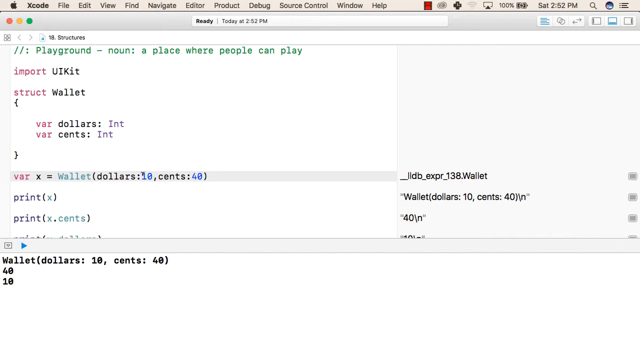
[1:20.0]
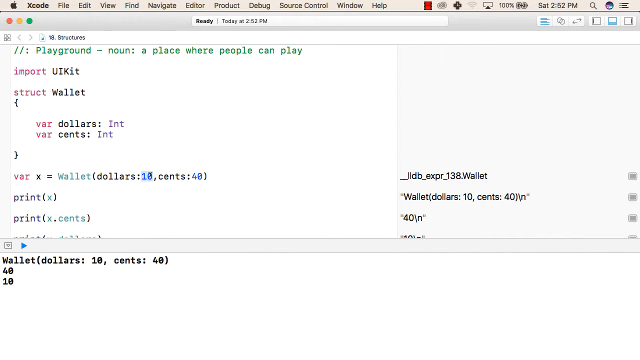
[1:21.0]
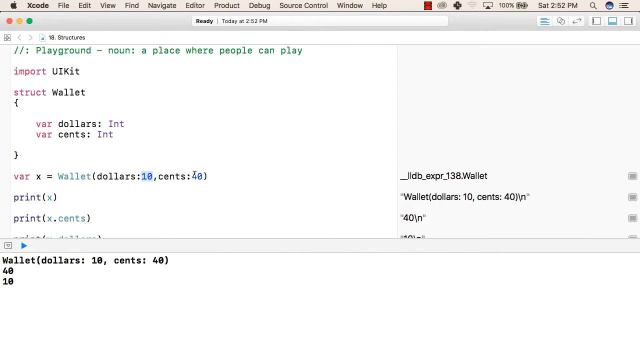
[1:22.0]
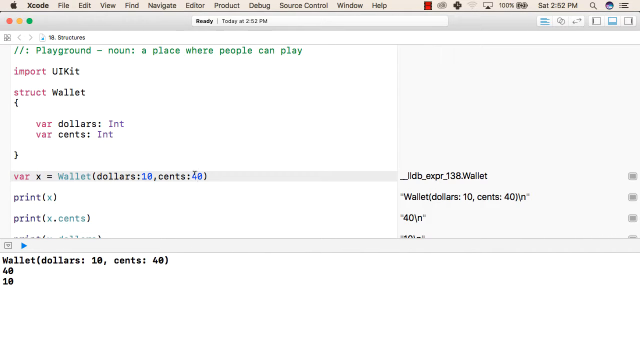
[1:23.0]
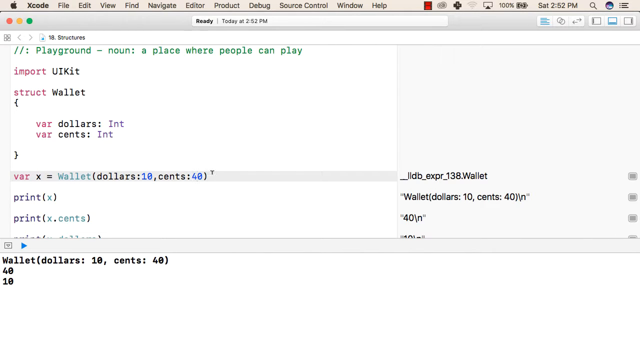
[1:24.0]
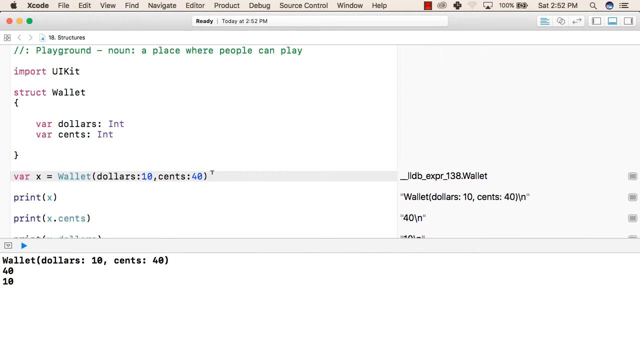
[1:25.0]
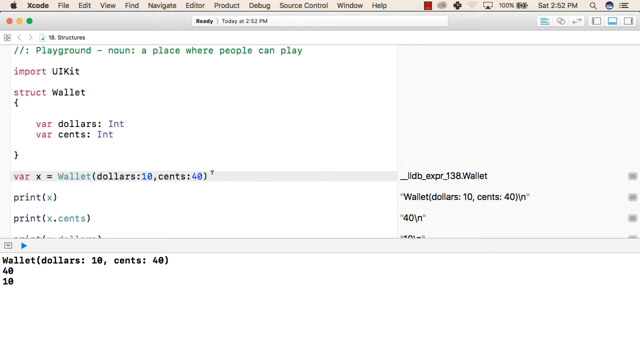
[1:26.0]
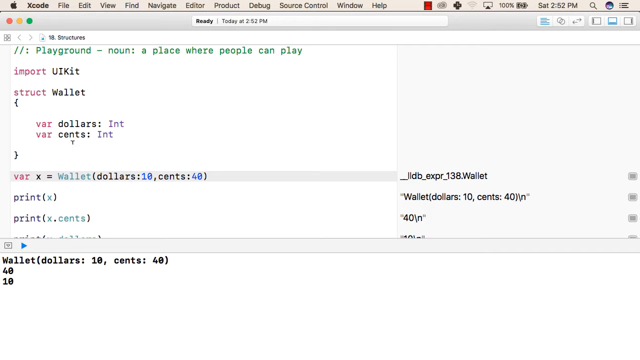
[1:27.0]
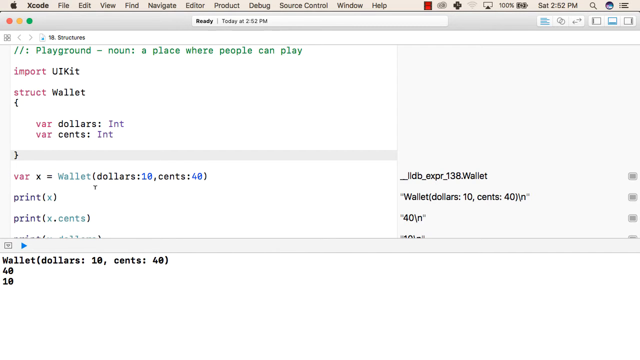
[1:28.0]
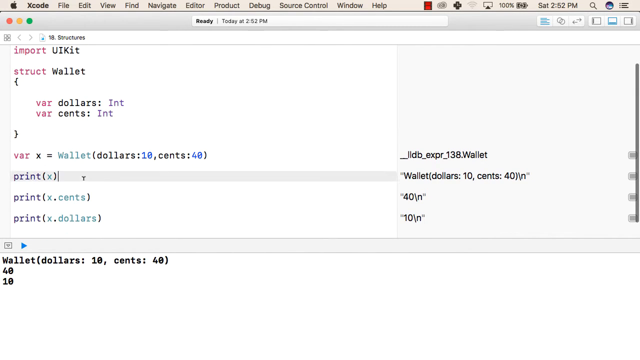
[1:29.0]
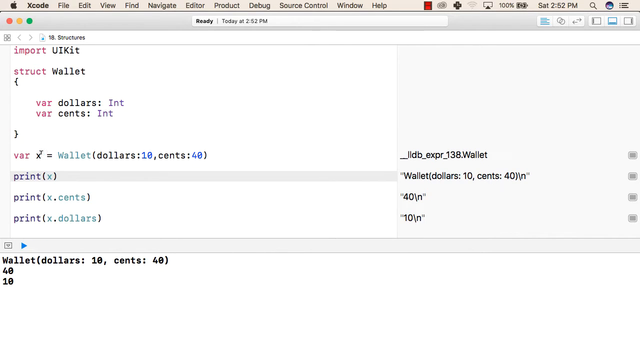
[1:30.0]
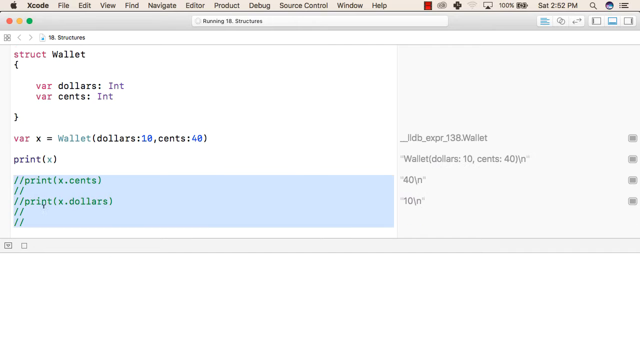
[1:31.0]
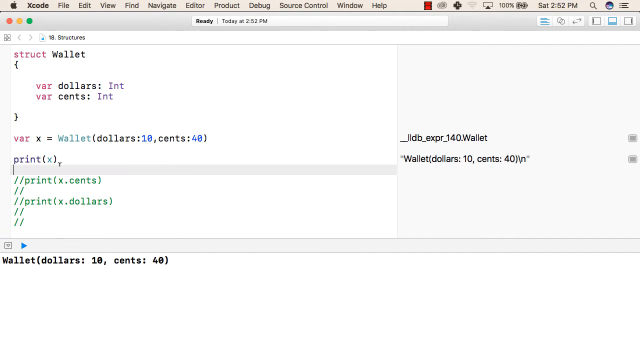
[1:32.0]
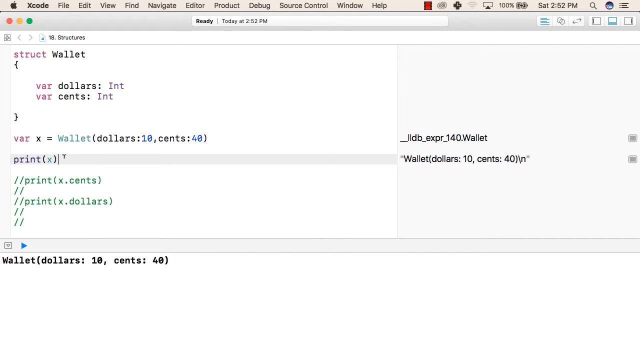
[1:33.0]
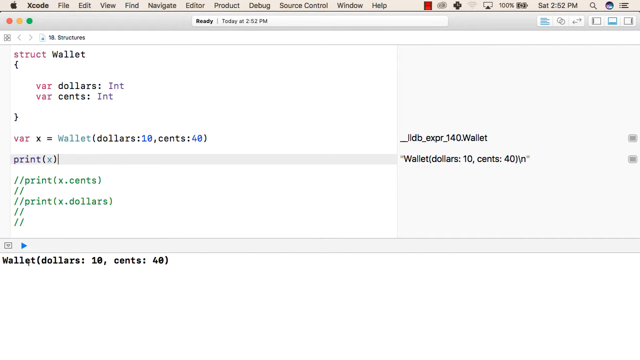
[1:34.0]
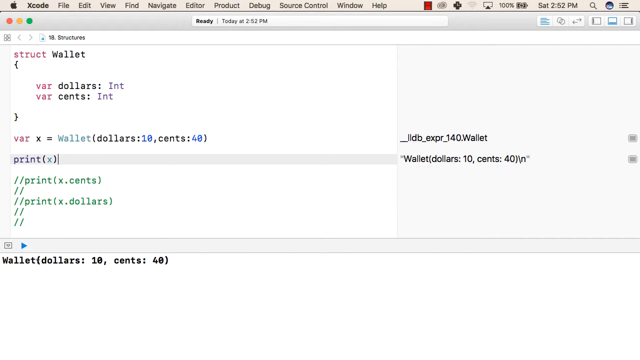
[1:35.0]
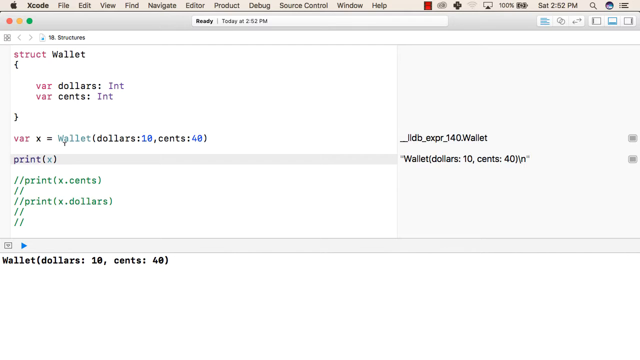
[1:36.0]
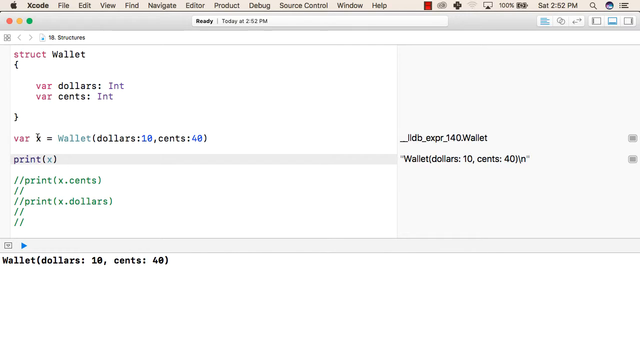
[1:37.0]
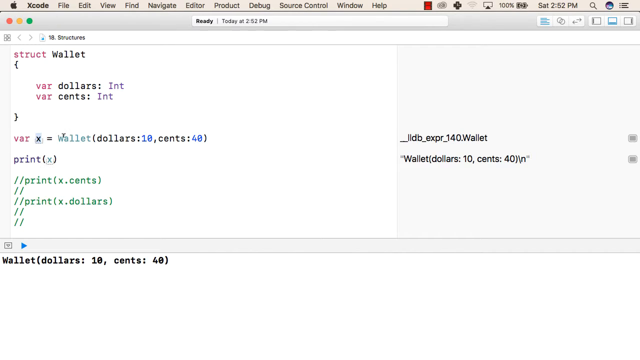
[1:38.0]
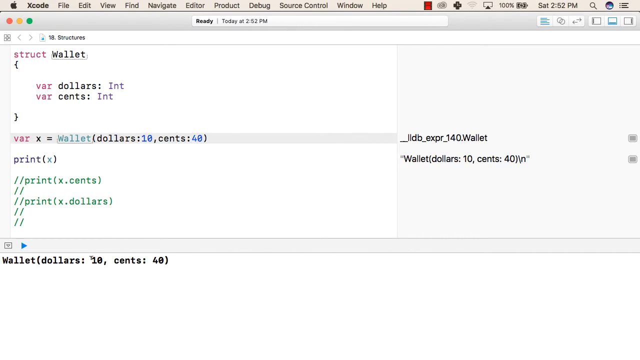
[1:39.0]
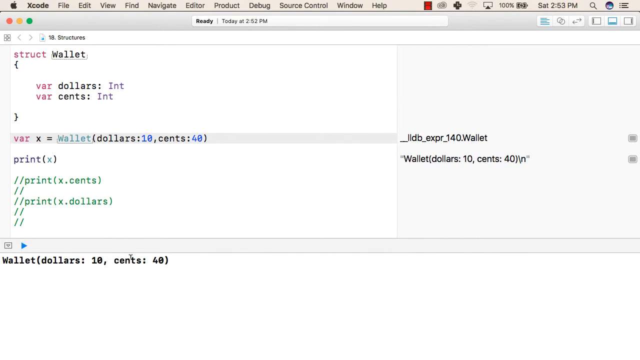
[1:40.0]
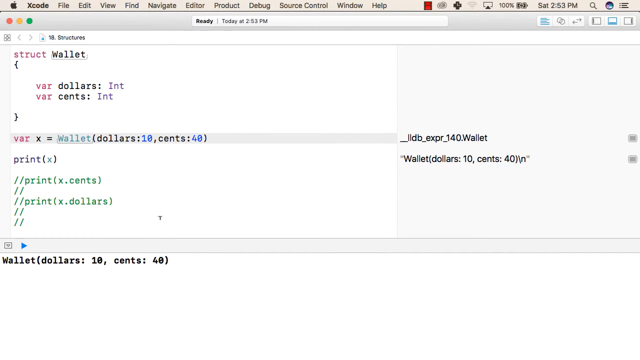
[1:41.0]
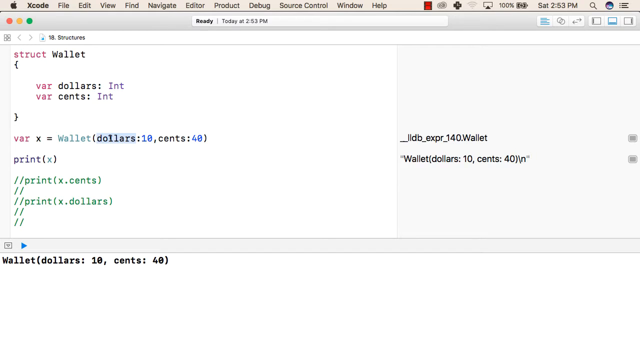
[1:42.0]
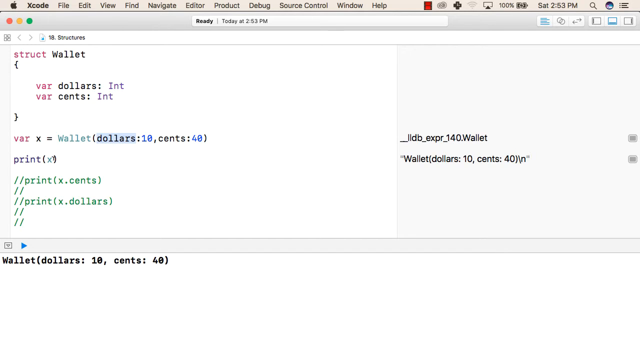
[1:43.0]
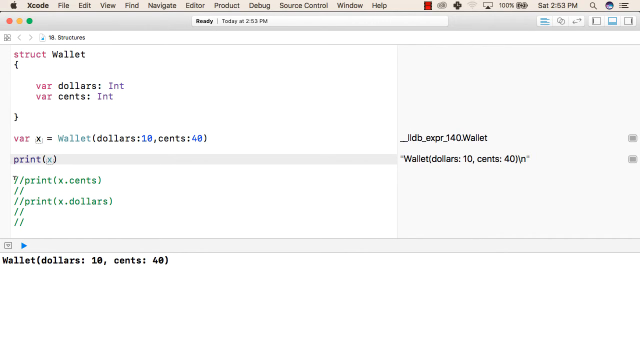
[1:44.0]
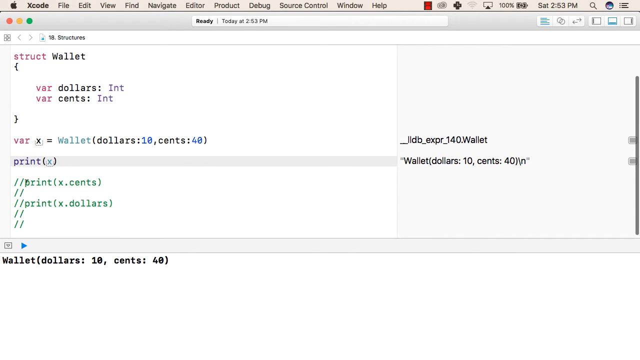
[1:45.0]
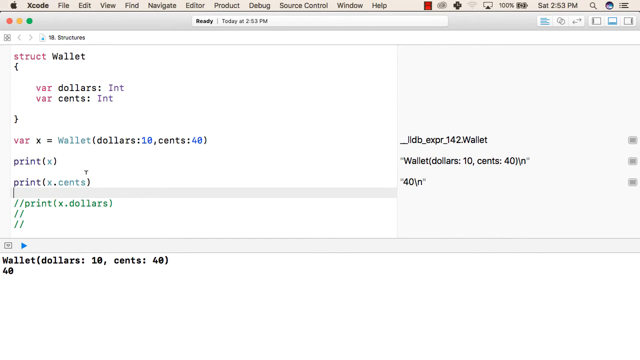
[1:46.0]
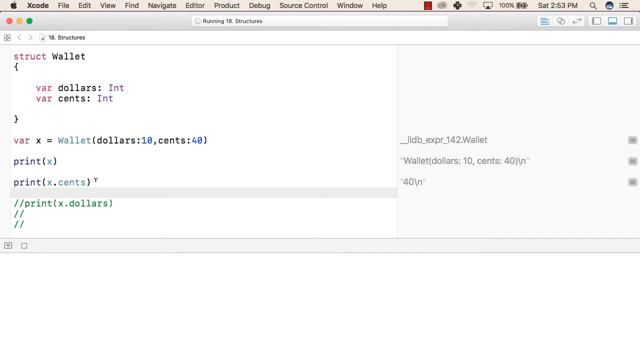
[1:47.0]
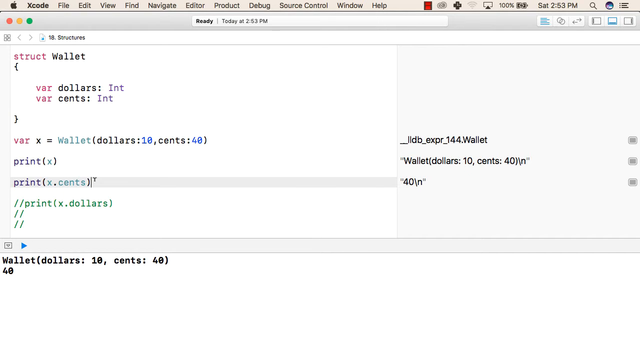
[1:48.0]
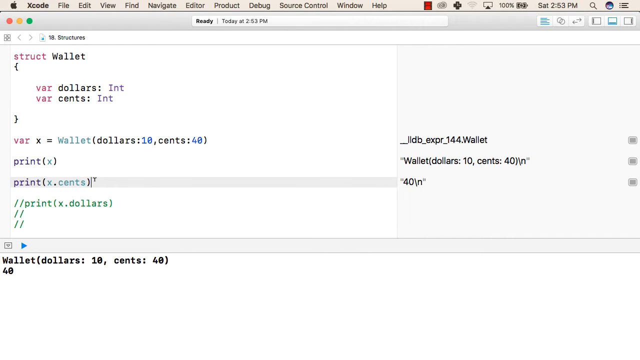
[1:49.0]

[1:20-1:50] A cursor moves across a line of code on the left side of the screen. It seems to be Xcode, as the text "Xcode" appears beside an Apple logo in the top left corner. The page is scrolled up to reveal more of the code. The code possibly has something to do with payments, with words like wallet, dollars and cents on some lines. The word "Int" also appears in parts of the code, possibly suggesting international payments. Values for dollars and cents are also visible. The cursor moves around different sections of the code, while the top of the screen shows navigation sections for the page and the text "structures" in the address bar.